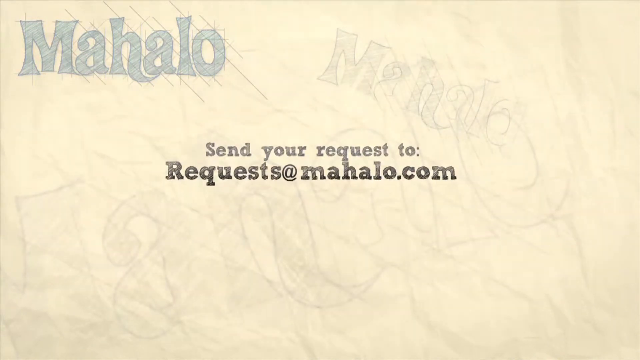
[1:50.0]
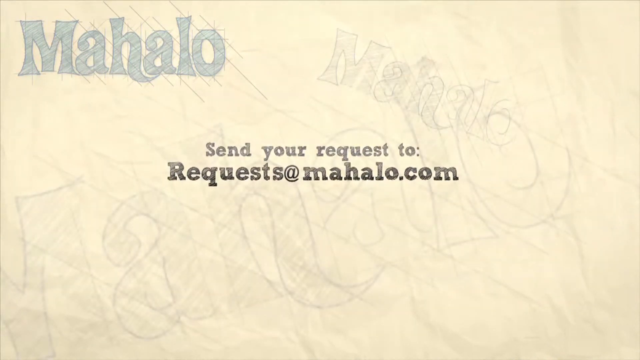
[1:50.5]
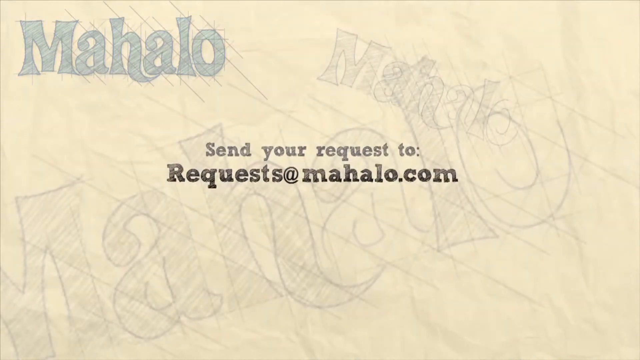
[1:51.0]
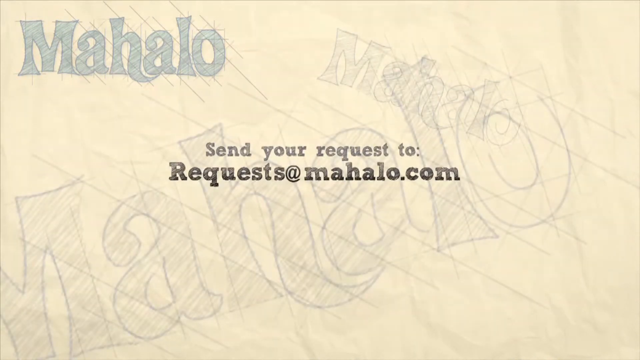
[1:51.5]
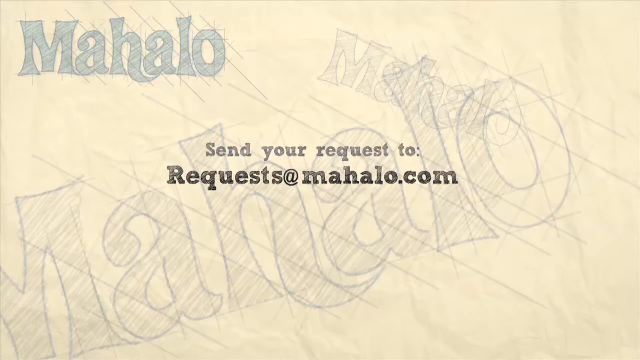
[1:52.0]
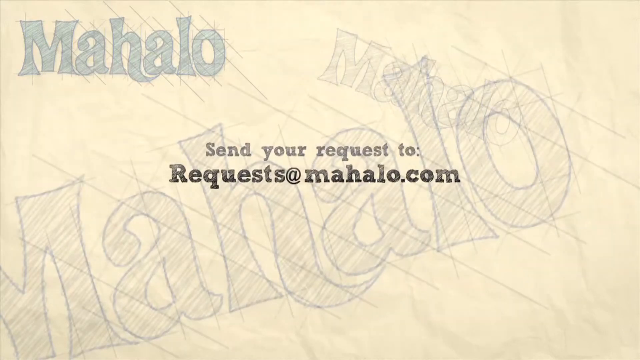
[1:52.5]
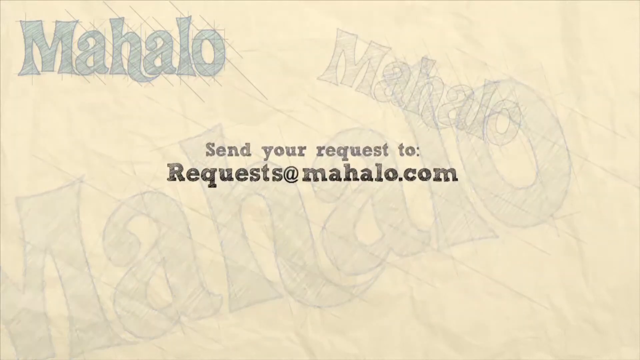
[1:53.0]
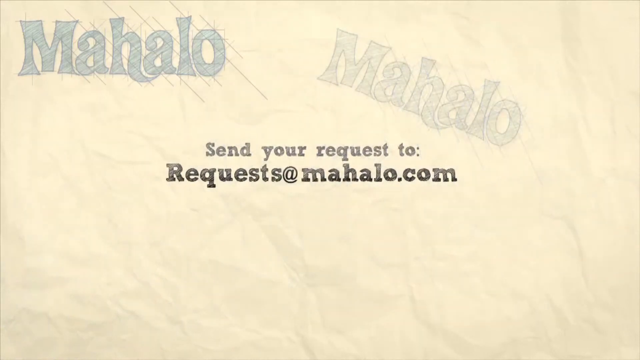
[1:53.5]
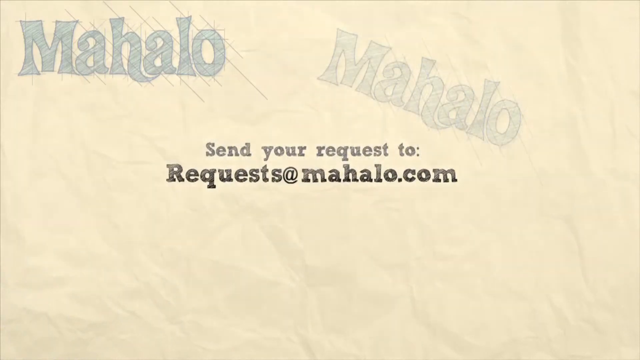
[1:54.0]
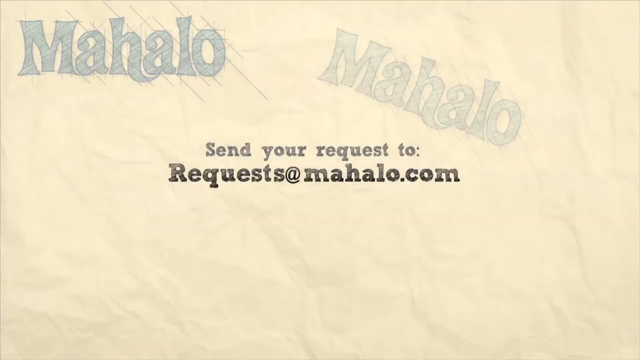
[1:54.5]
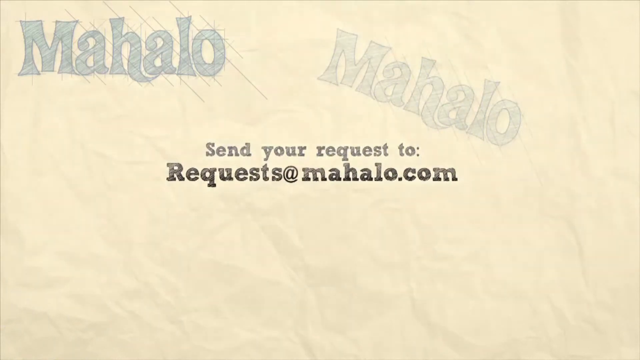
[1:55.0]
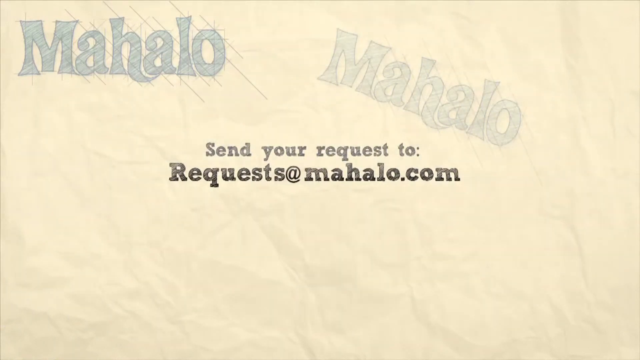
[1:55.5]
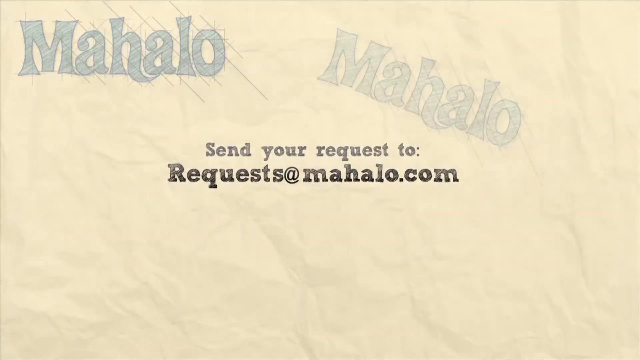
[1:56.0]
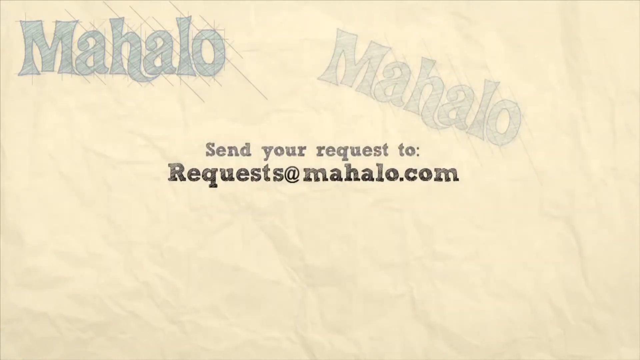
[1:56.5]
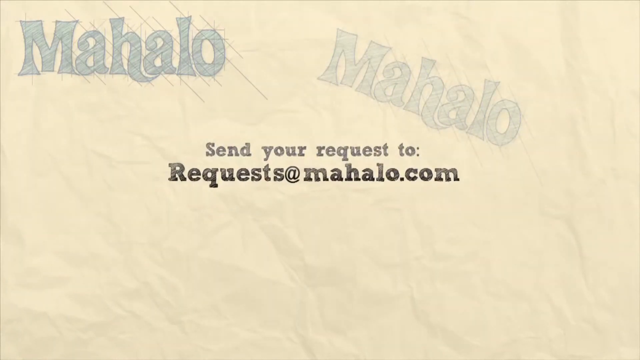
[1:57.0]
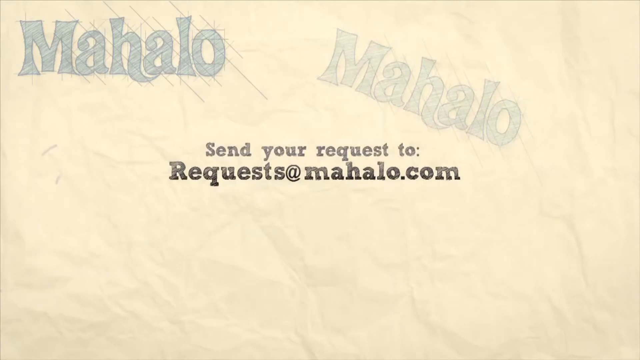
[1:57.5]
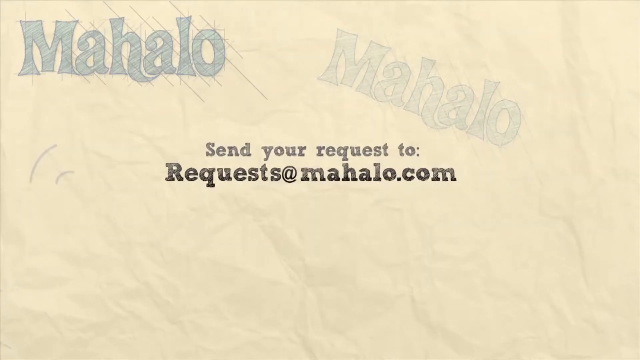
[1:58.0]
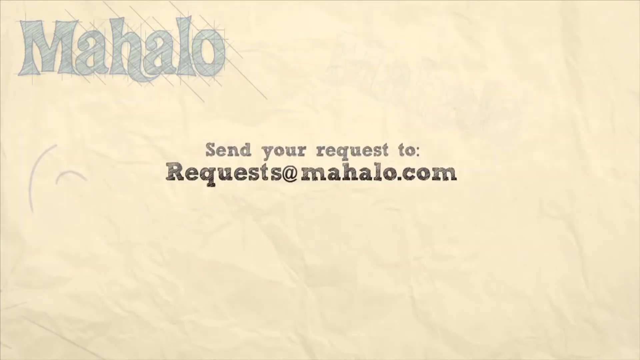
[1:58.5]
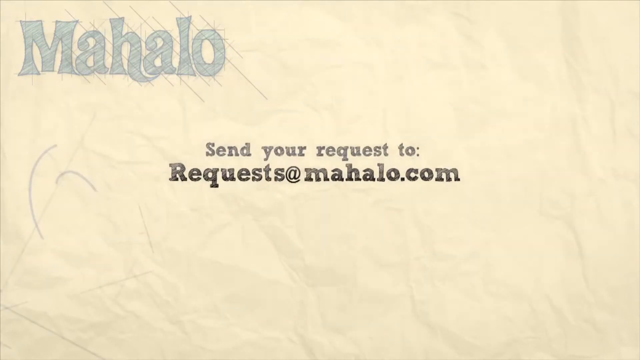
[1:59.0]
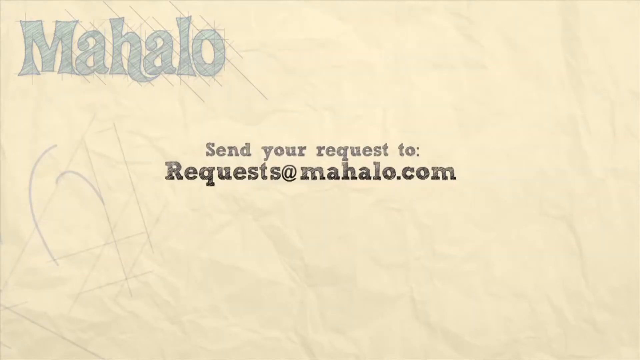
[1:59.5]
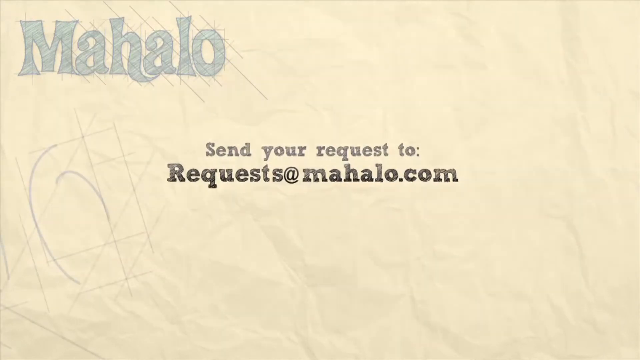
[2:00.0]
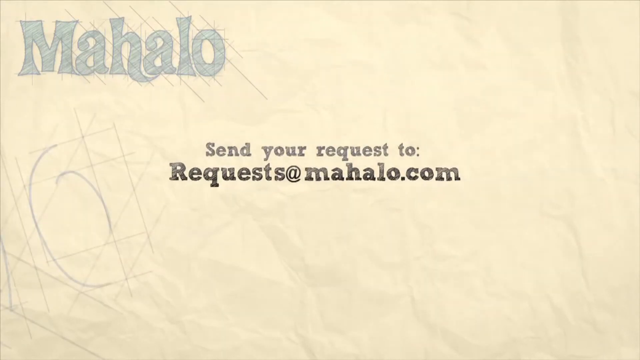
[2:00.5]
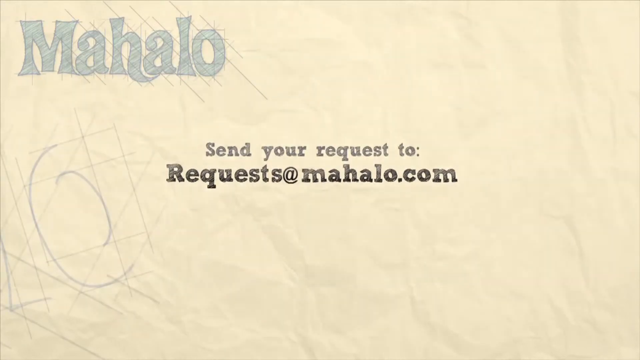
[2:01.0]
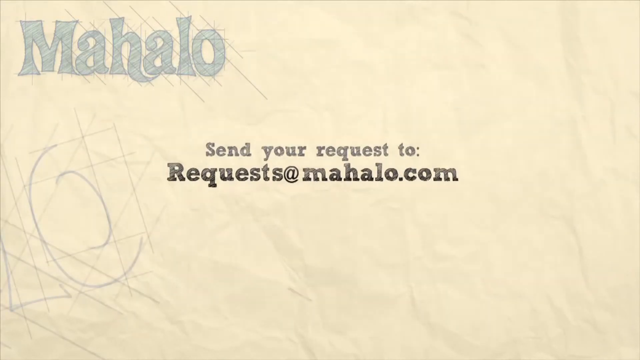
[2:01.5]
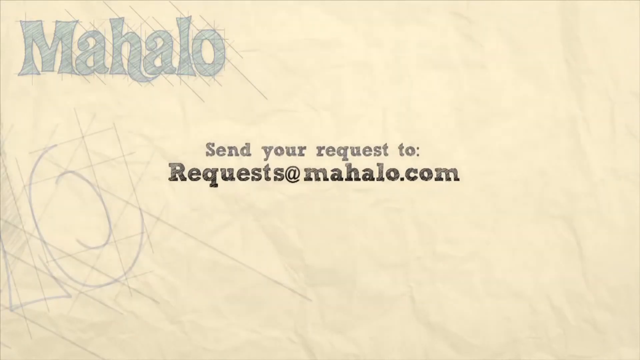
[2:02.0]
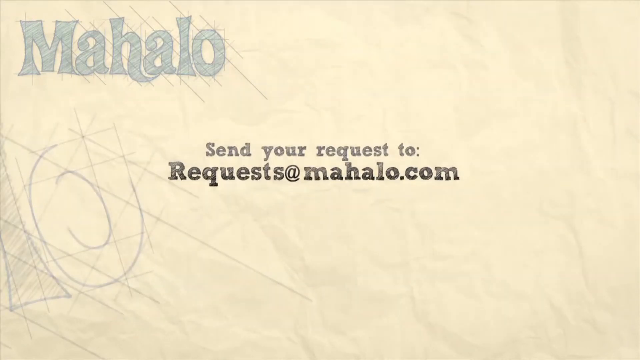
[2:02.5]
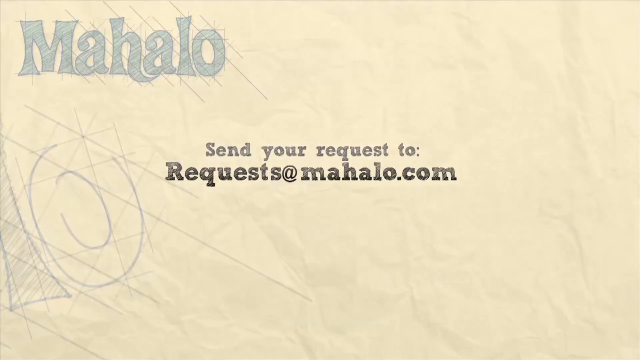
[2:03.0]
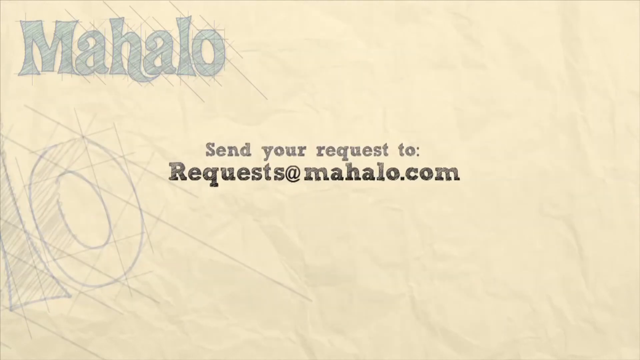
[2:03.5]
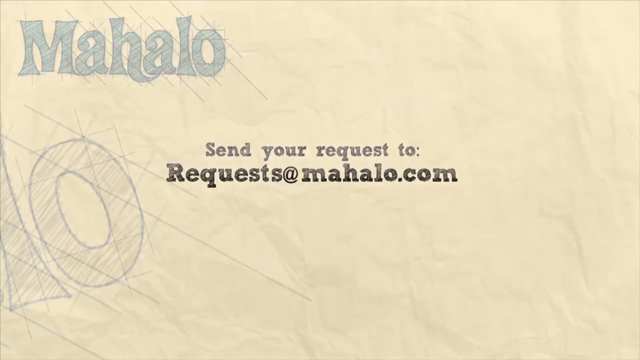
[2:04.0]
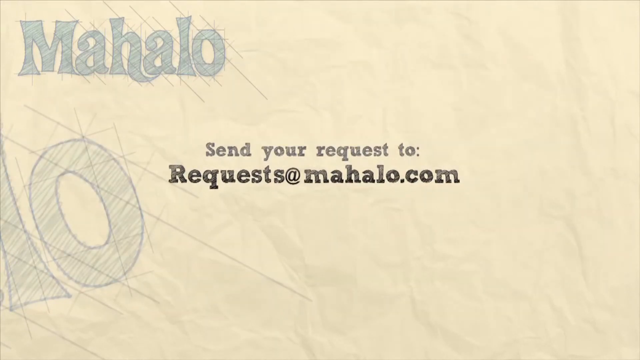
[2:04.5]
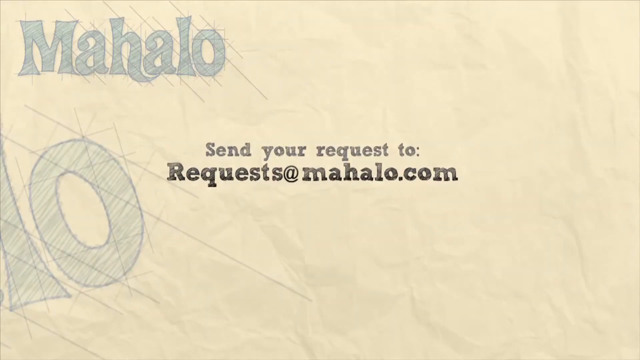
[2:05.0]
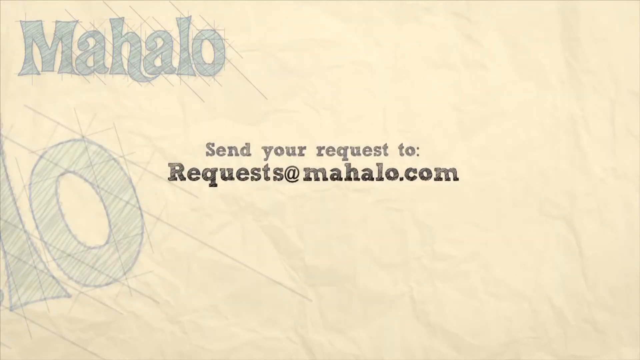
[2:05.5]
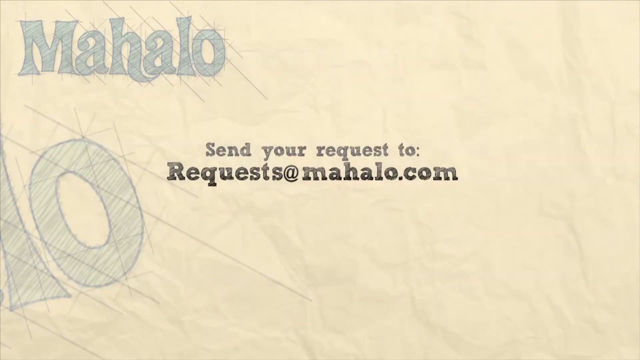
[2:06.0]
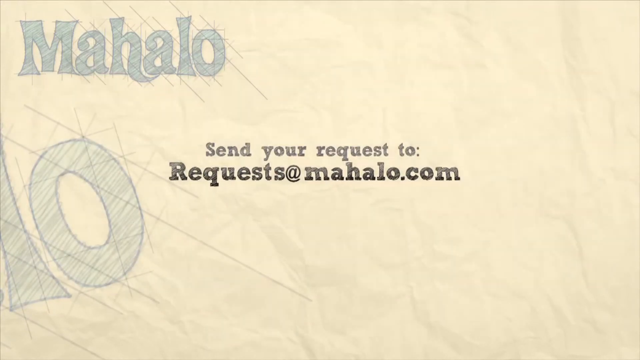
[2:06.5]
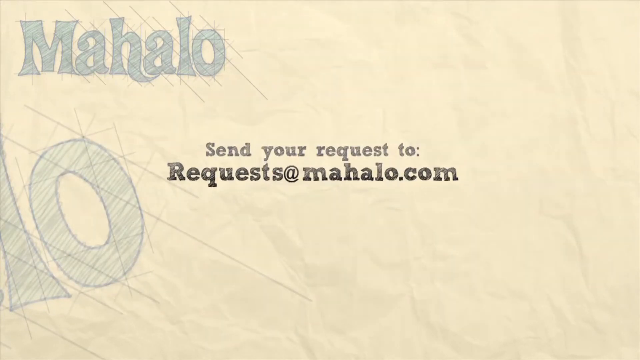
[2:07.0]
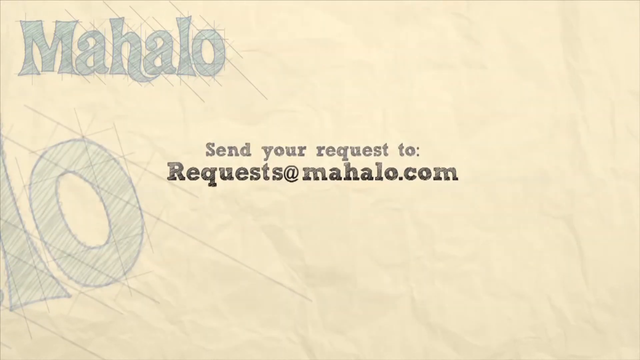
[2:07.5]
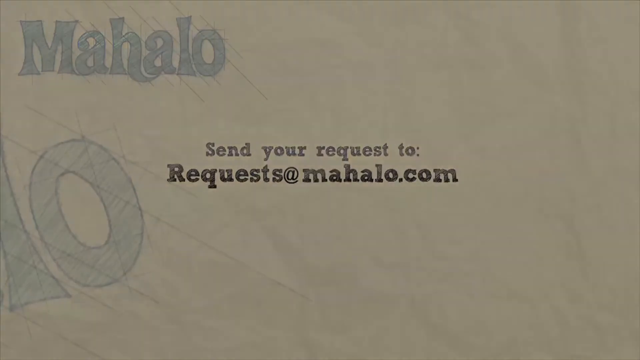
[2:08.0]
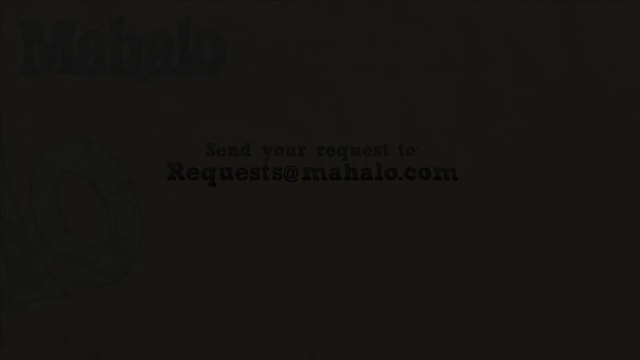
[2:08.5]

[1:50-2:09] Something in the middle seems to pulsate for a moment while "mahalo" is being written. The "mahalo" that was at the bottom right is now written more in the middle, slanting up. There are two more "mahalo"s: a smaller one, shaded but not colored blue, slanting down behind the one in the middle, and one in blue at the top left. The word "mahalo" in the request text moves down, right, up and left, while the part above it, "send request to", does not move. The blue "mahalo" at the top left stays in place, while the bigger text behind it starts to spell, apparently the last letters of "mahalo", to the left of the center text. The background is a crinkled beige piece of paper with a yellowish tint, giving a realistic look. The "mahalo" pencil marking starts in a graphite gray color and then turns blue, with "mahalo" placed in different spots around the paper and the text in the middle.